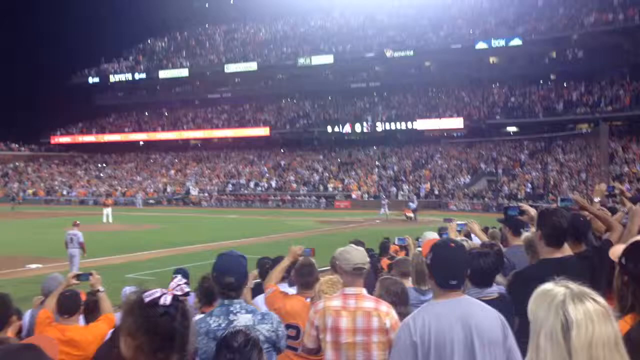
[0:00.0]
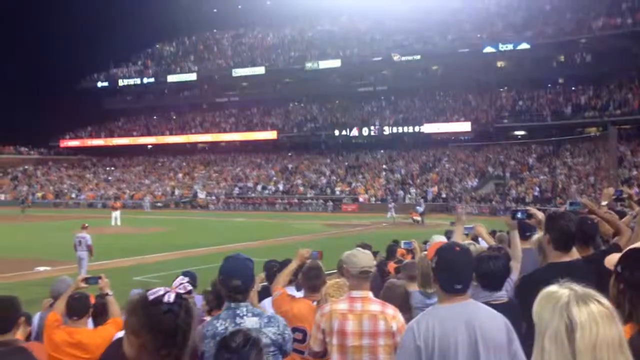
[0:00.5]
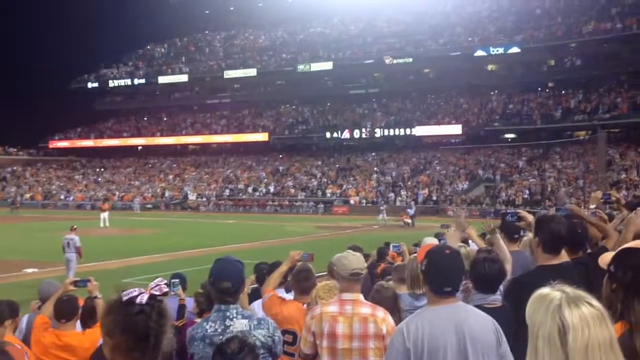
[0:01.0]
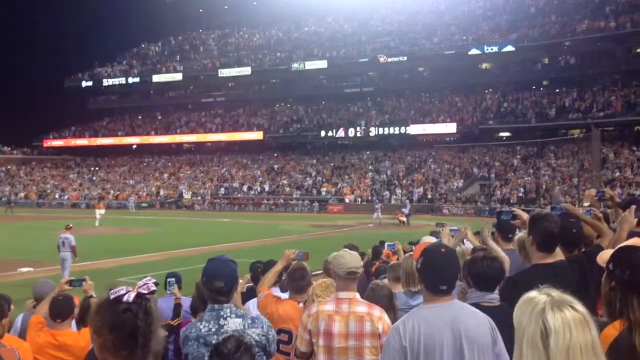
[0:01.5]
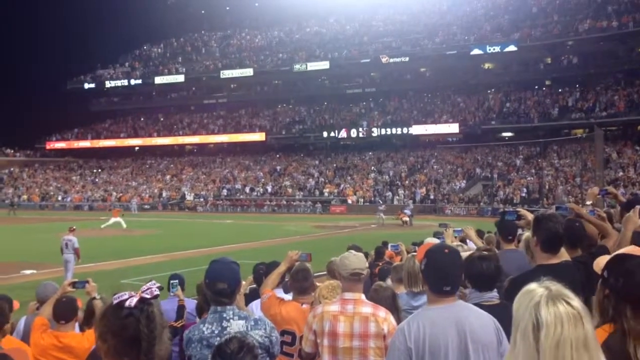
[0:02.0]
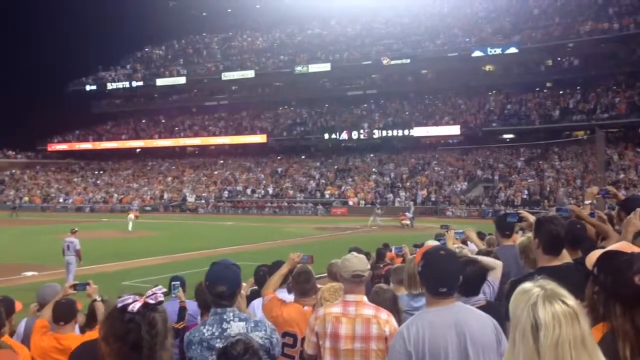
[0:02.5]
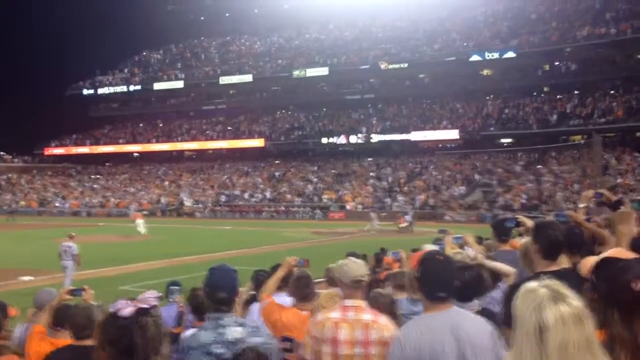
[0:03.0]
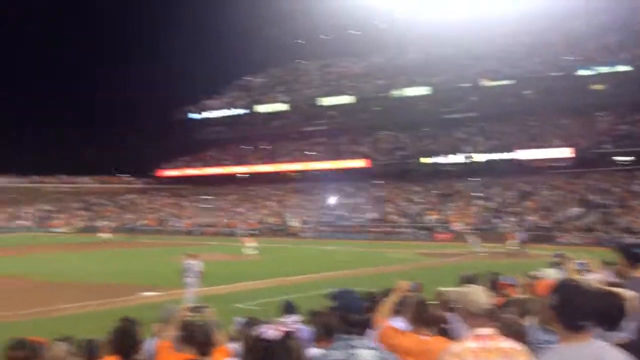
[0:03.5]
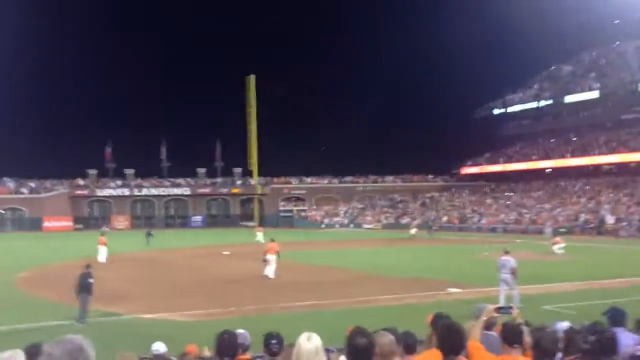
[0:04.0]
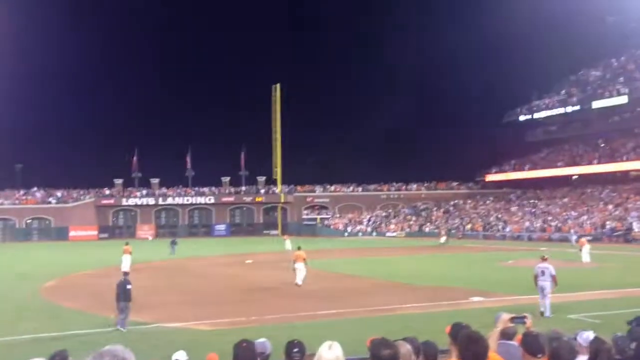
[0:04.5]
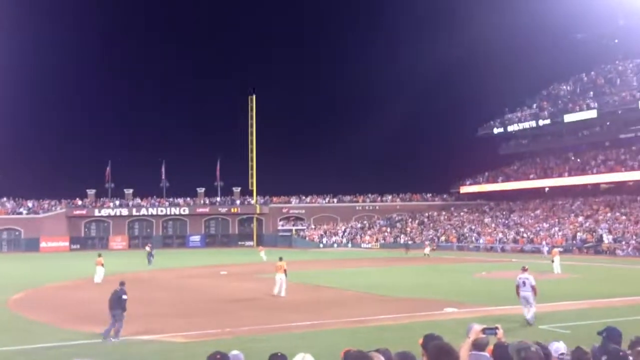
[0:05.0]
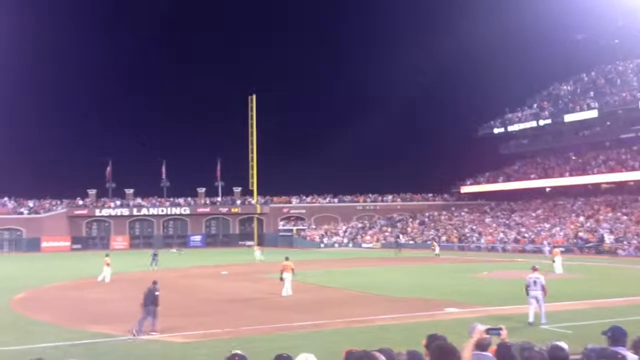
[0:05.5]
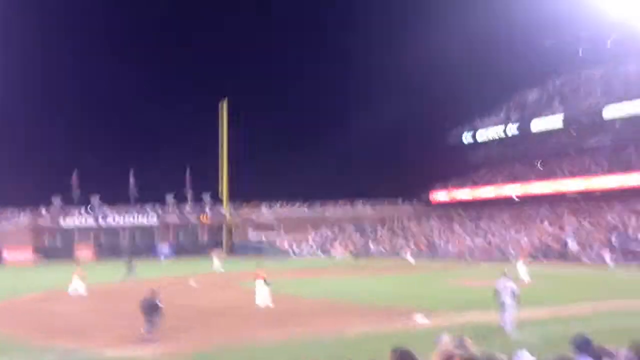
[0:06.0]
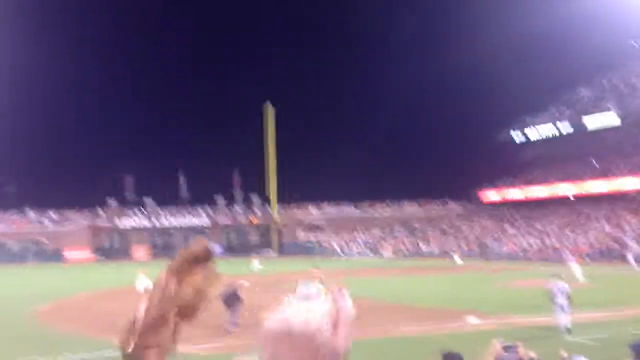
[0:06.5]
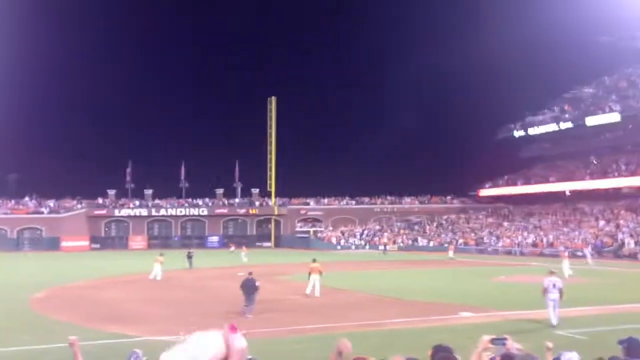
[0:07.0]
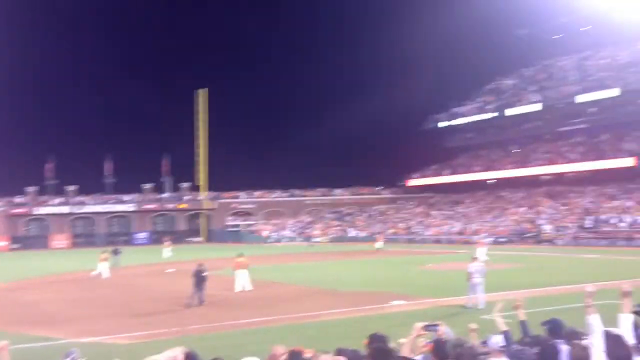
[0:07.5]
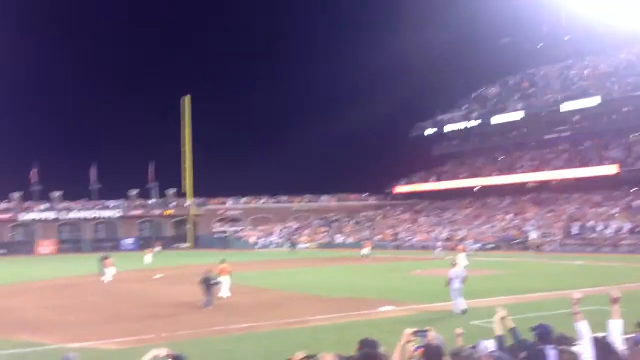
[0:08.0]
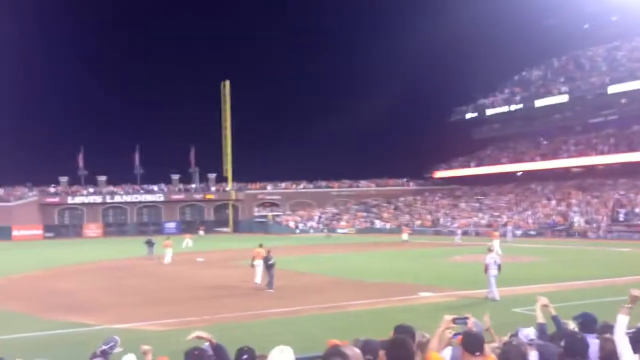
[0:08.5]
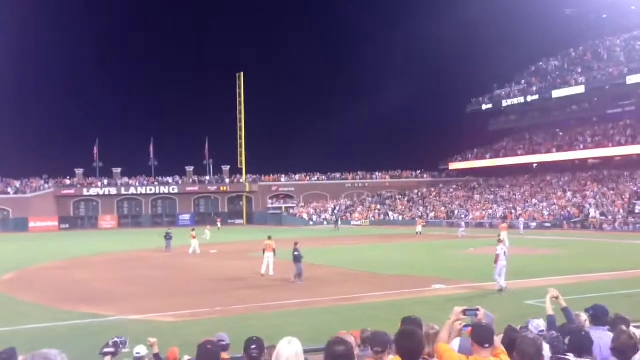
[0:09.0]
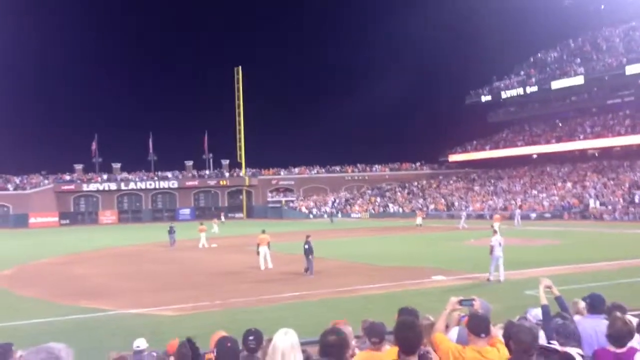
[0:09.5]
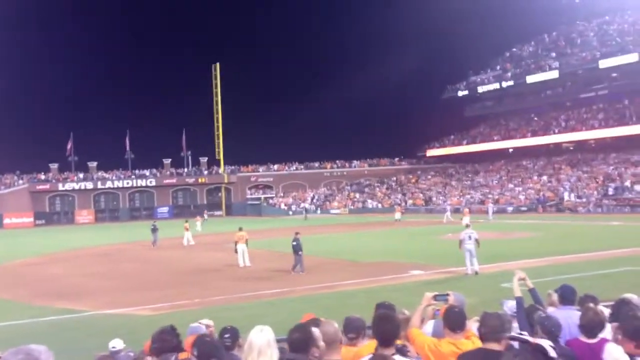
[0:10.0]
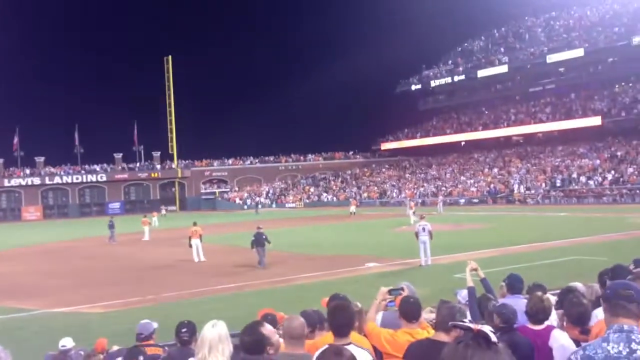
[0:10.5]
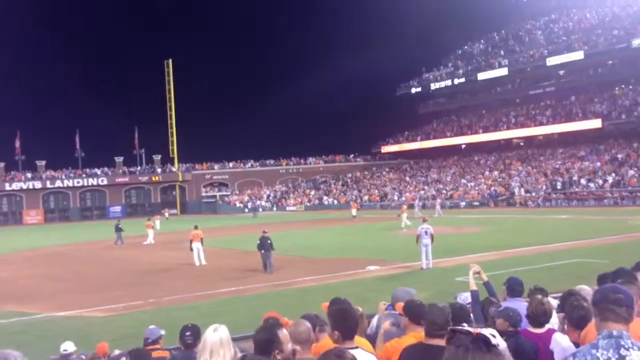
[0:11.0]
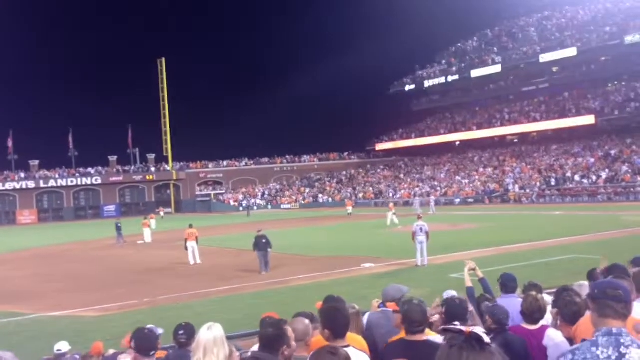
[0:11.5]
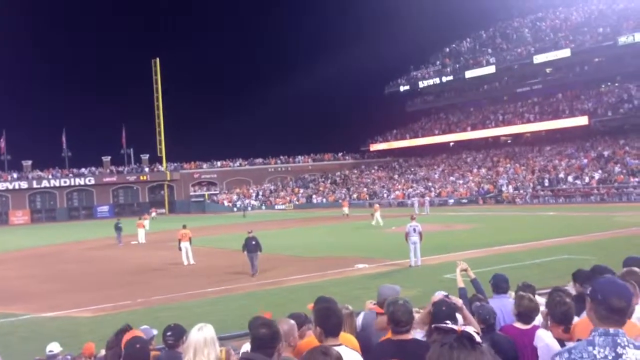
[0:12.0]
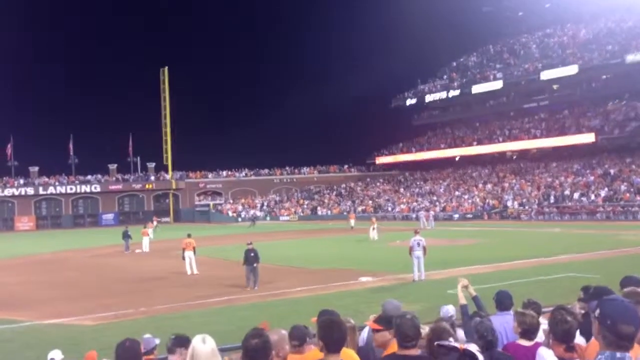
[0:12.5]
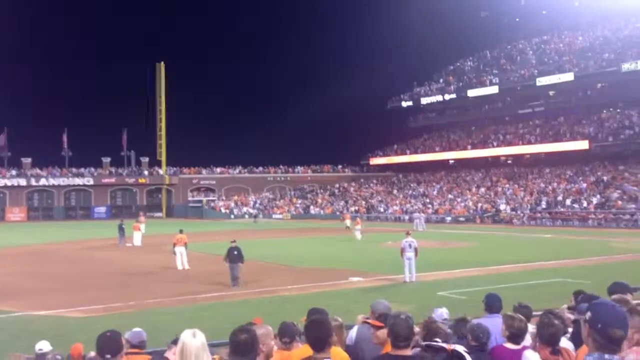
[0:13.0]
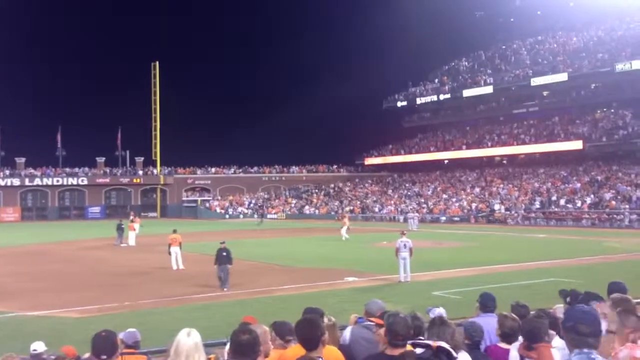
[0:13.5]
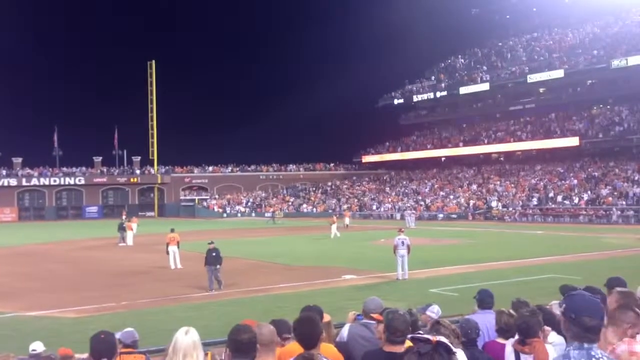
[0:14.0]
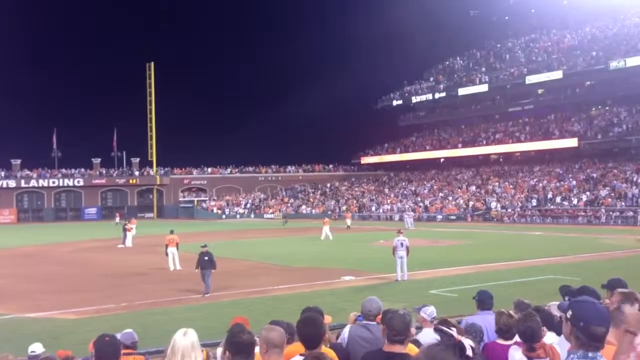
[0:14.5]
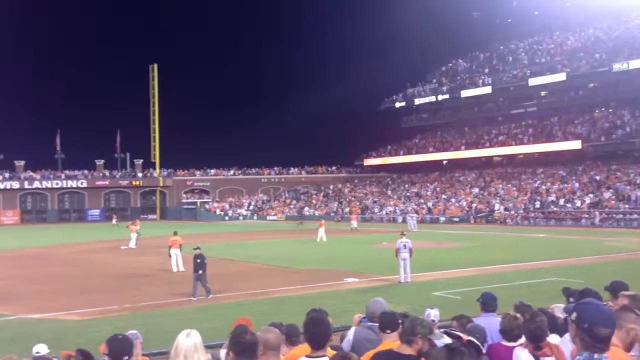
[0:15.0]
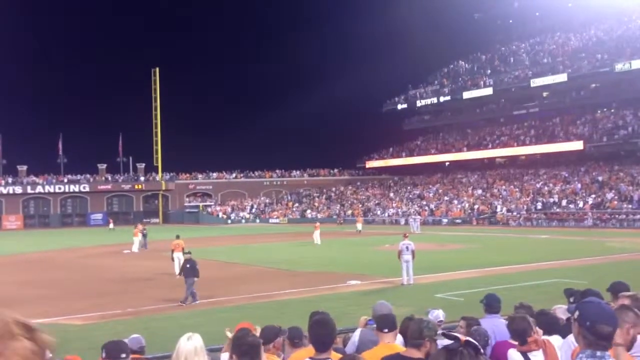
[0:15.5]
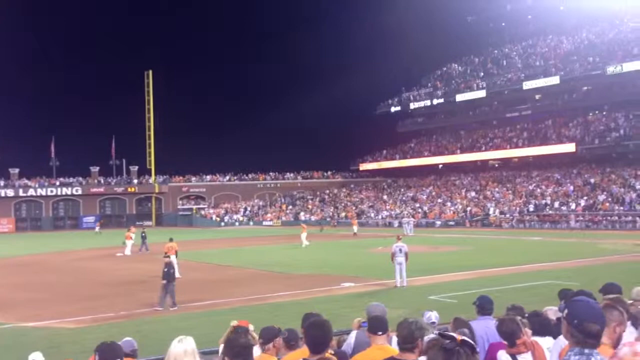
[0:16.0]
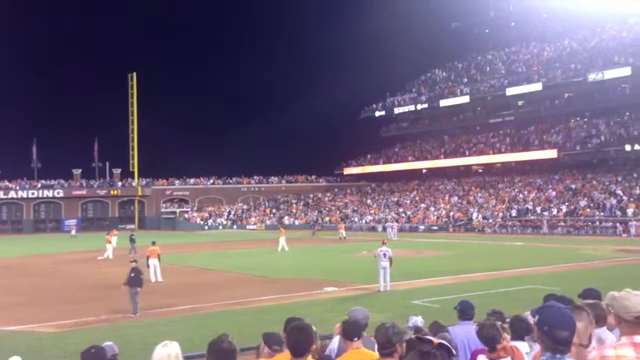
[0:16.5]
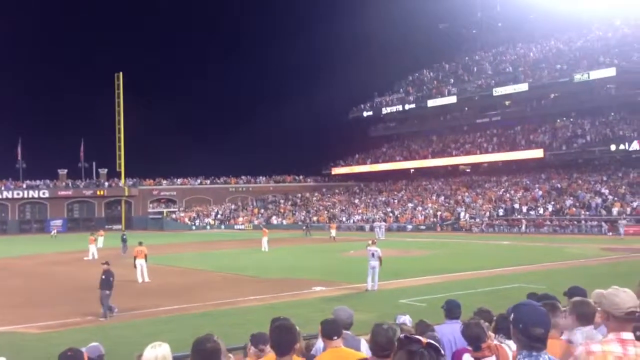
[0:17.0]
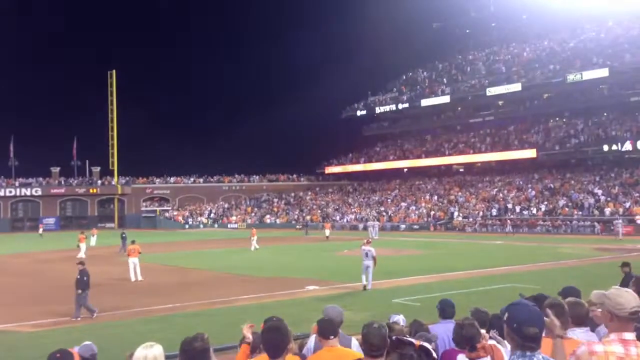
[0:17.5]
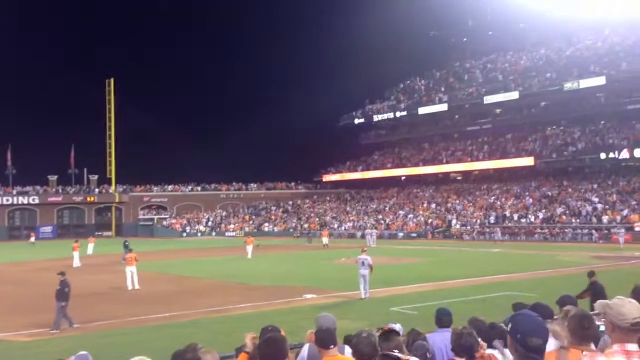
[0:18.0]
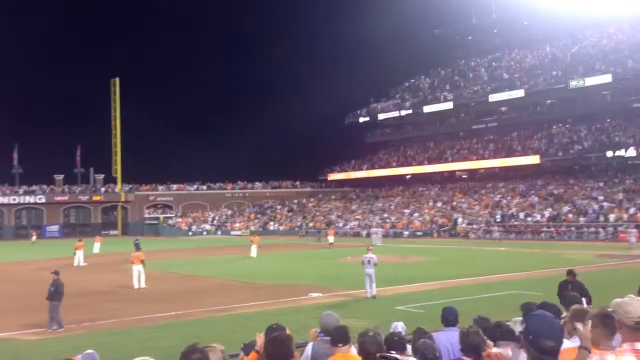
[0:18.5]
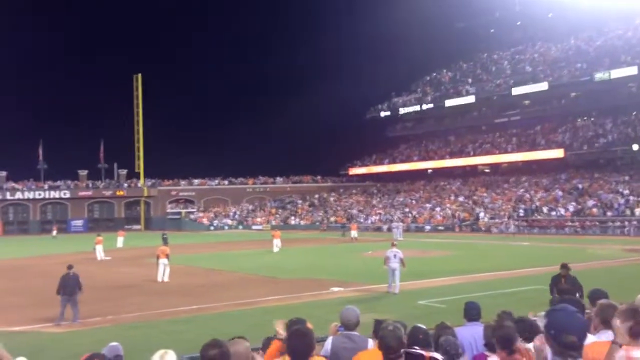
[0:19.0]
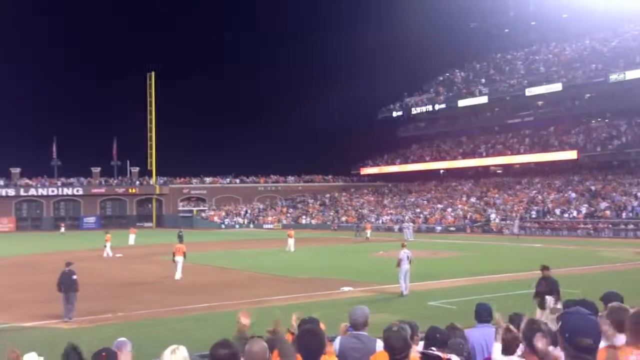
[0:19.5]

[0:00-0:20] At a baseball game at night, the sky is dark. The view starts on the pitcher, who wears orange, and the batsman. The batsman hits the ball, and the camera moves sharply to the rest of the diamond. The crowd cheers, apparently because one of the fielders caught the ball. Many people in the crowd wear orange, possibly supporters of the home team. There is a yellow vertical object, either a light or some kind of scaffolding, and what appears to be some advertising. The field is quite green, with a large brown area where the batsmen run around the diamond and also under the pitcher's mound.